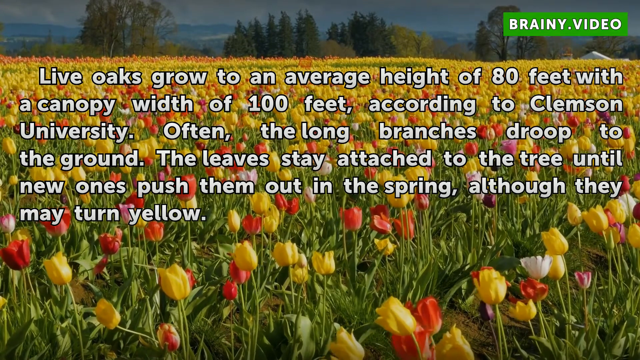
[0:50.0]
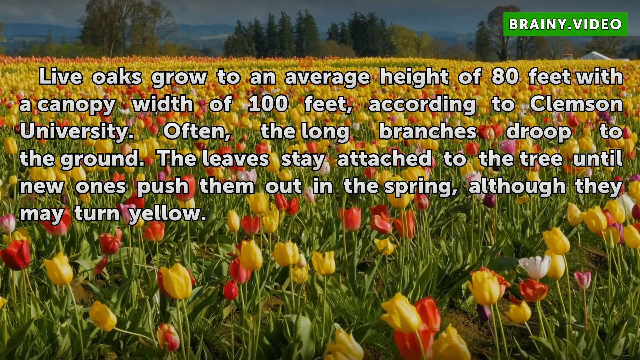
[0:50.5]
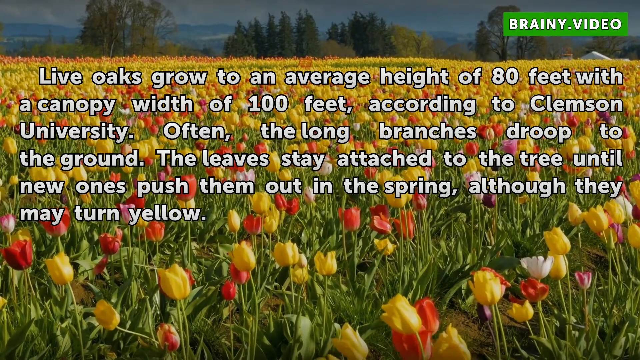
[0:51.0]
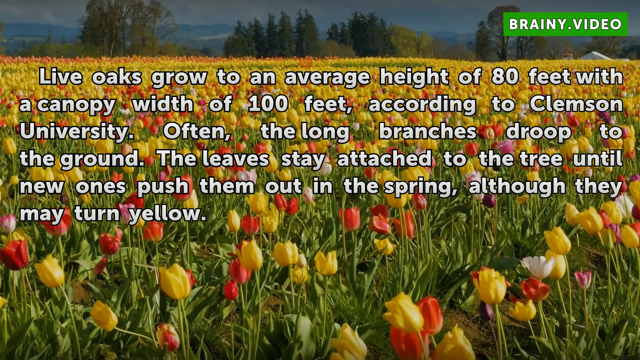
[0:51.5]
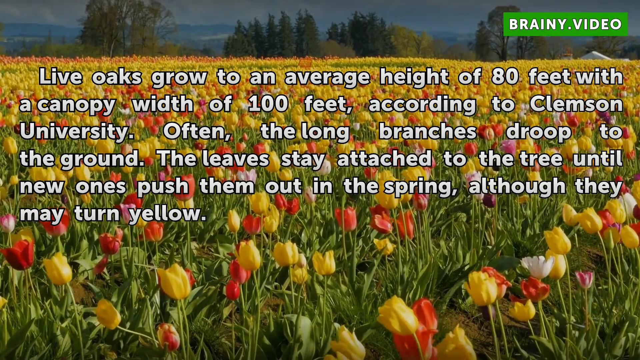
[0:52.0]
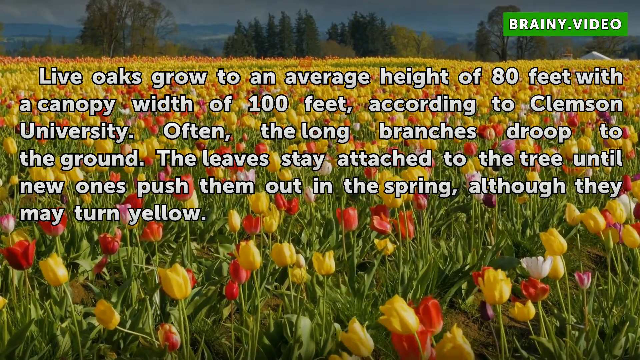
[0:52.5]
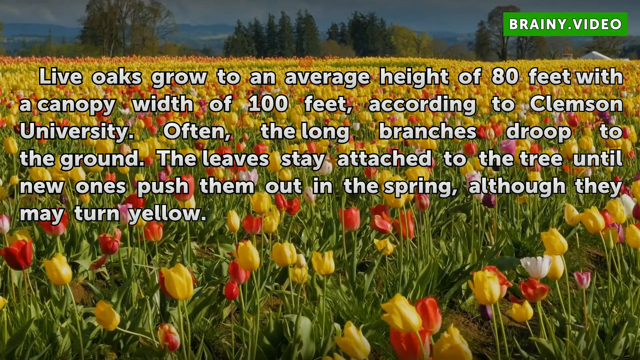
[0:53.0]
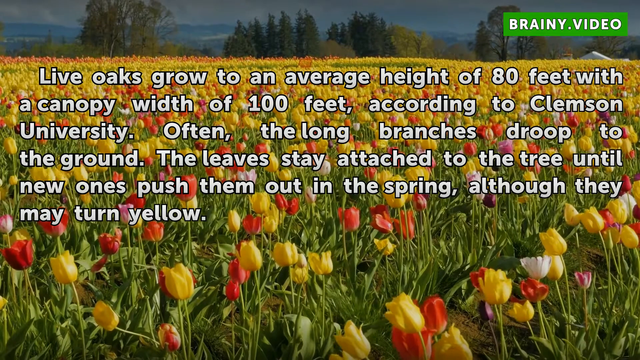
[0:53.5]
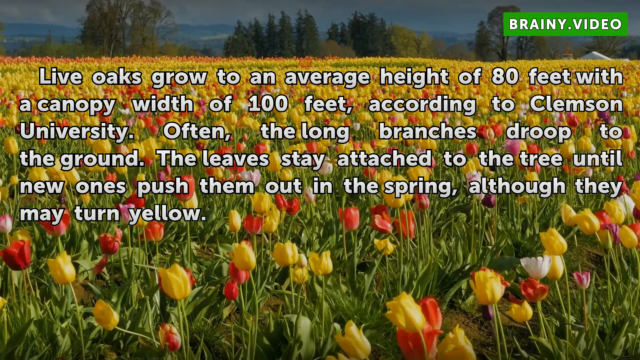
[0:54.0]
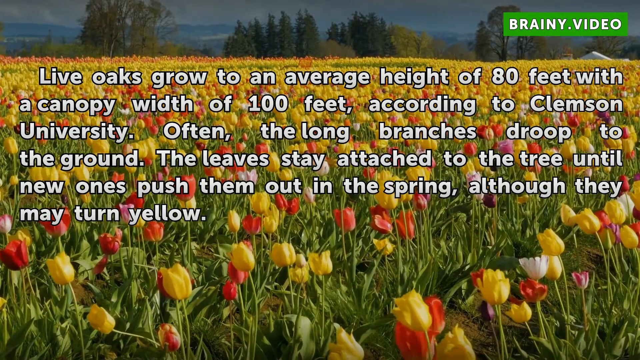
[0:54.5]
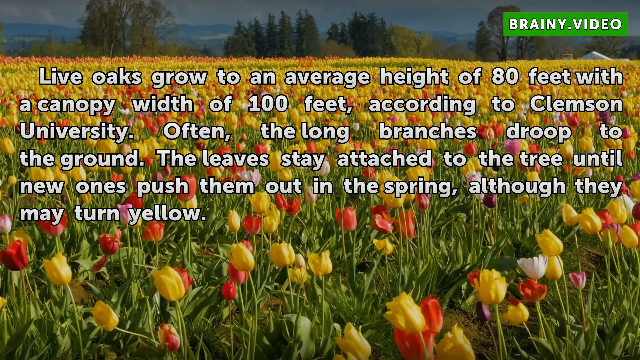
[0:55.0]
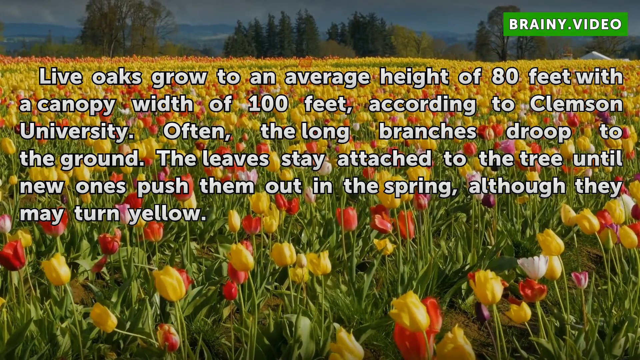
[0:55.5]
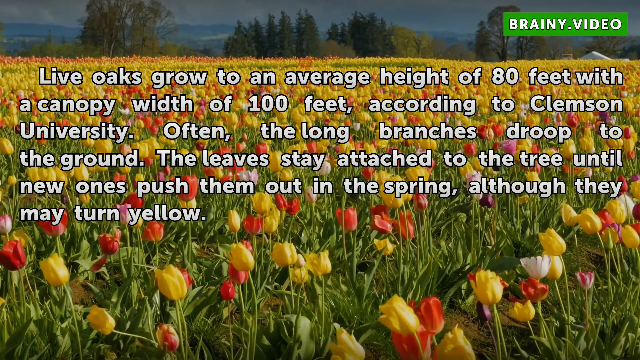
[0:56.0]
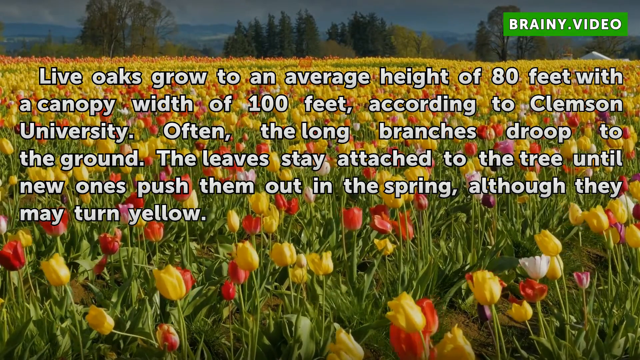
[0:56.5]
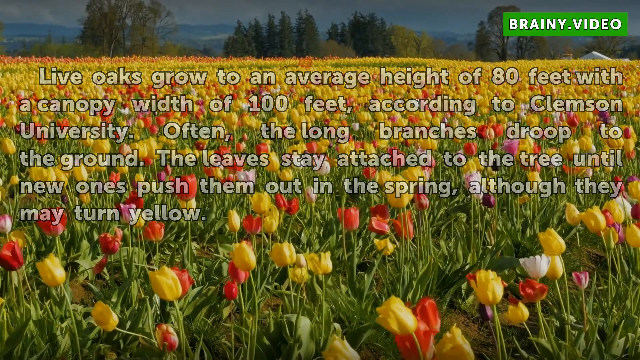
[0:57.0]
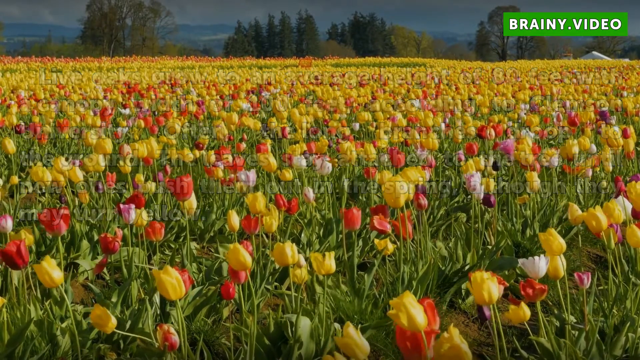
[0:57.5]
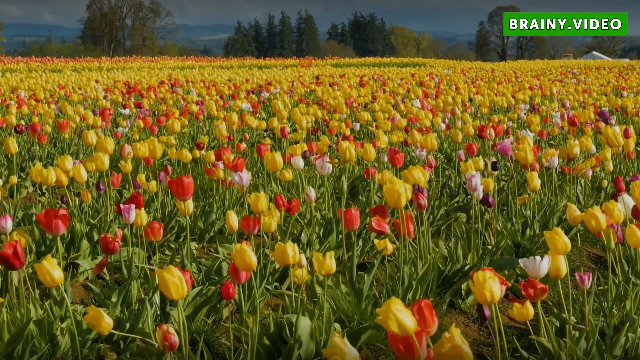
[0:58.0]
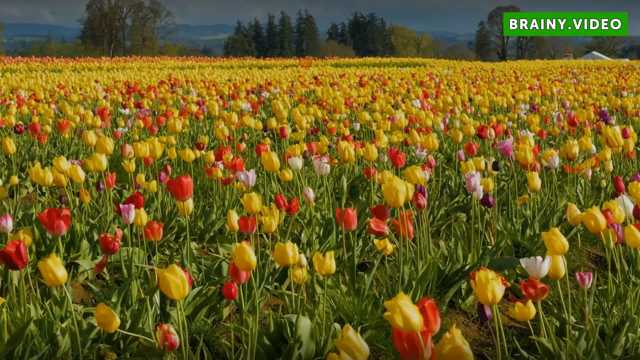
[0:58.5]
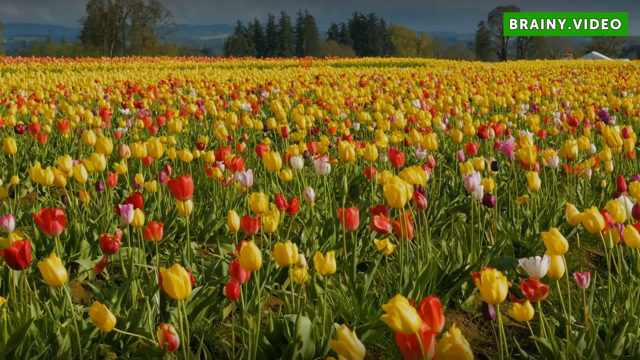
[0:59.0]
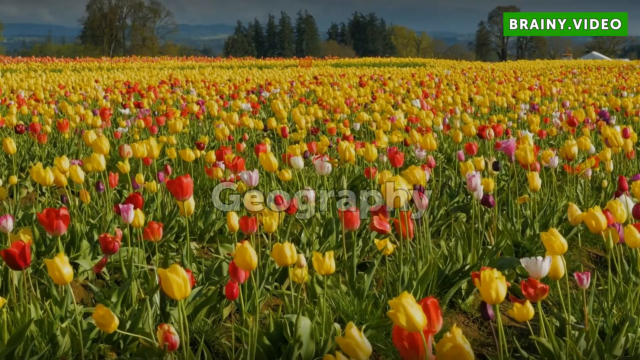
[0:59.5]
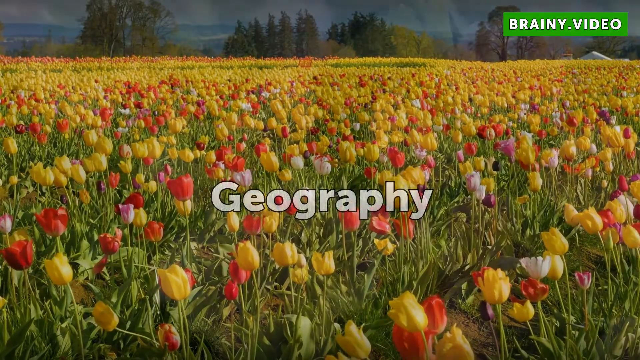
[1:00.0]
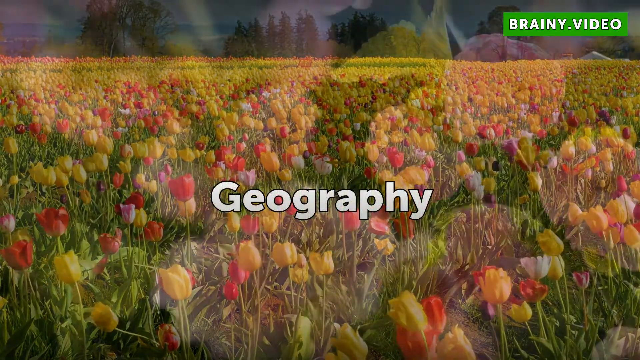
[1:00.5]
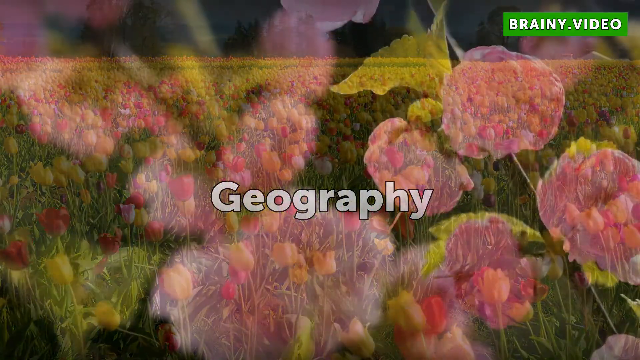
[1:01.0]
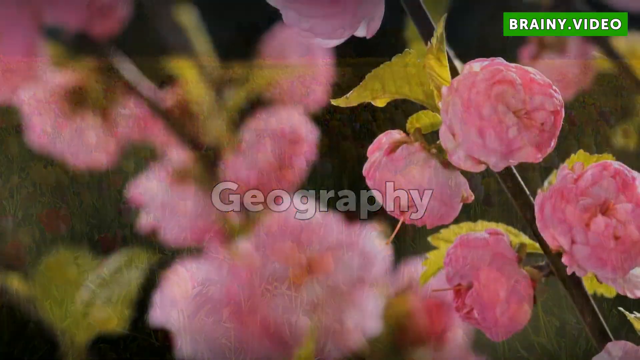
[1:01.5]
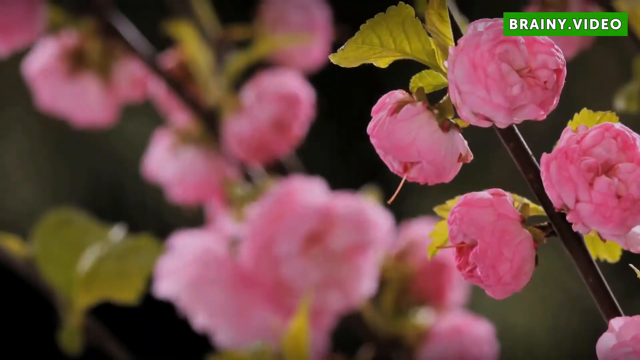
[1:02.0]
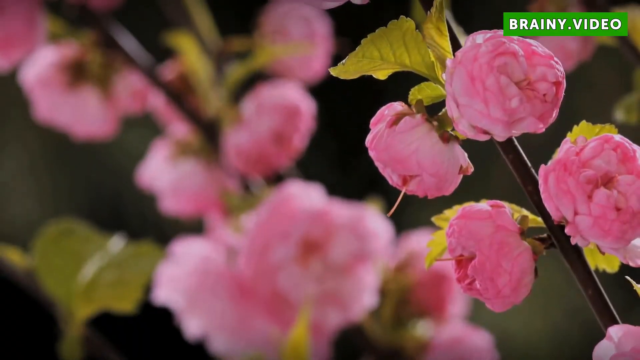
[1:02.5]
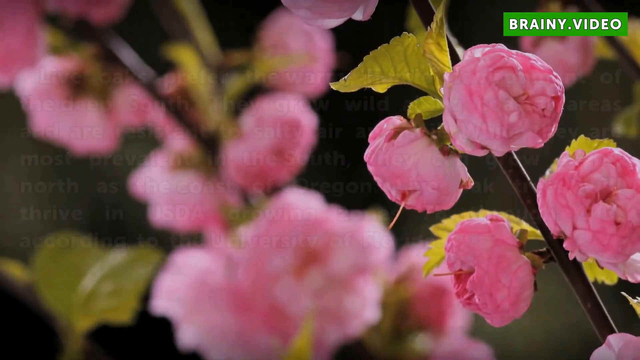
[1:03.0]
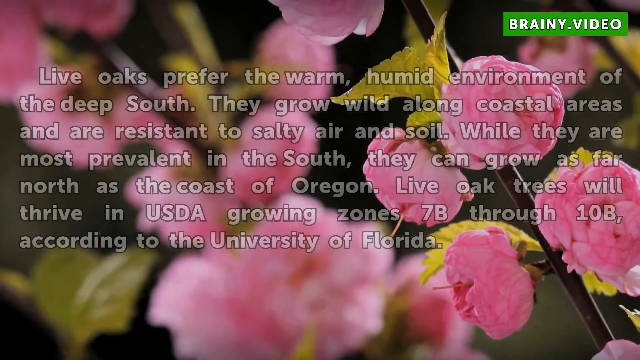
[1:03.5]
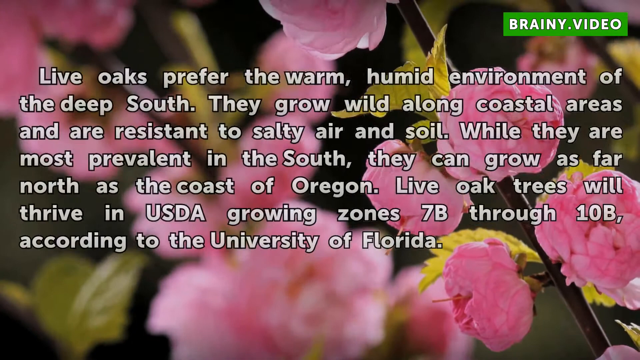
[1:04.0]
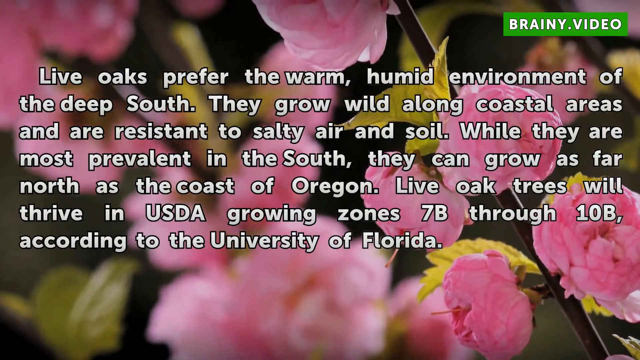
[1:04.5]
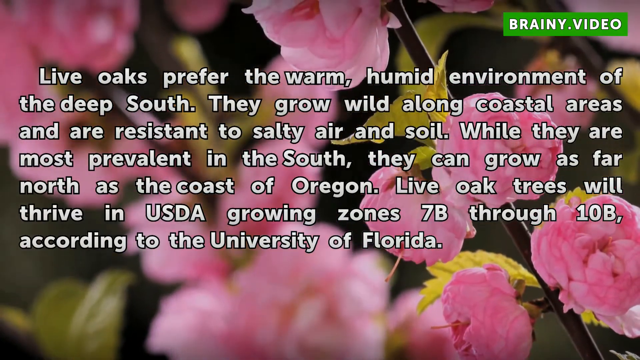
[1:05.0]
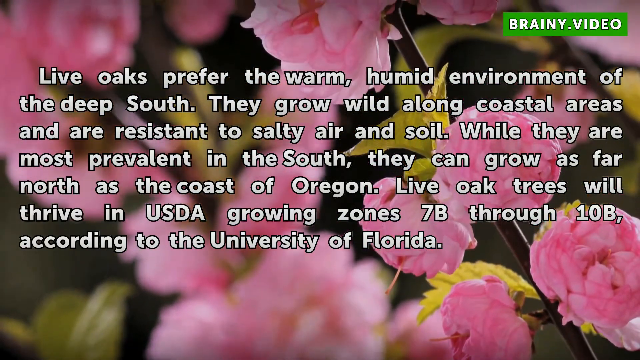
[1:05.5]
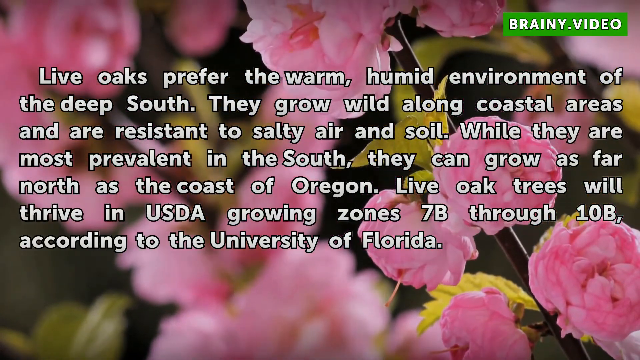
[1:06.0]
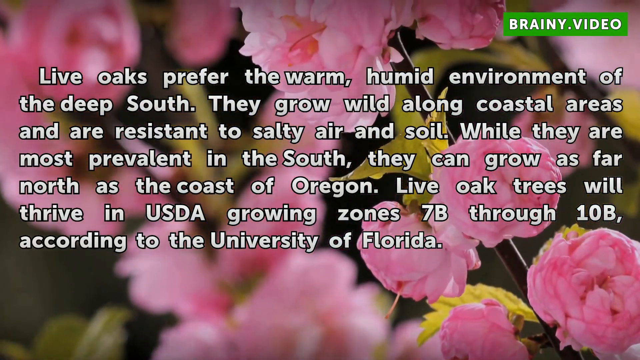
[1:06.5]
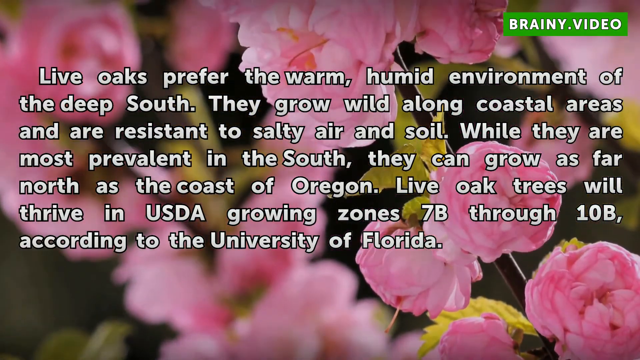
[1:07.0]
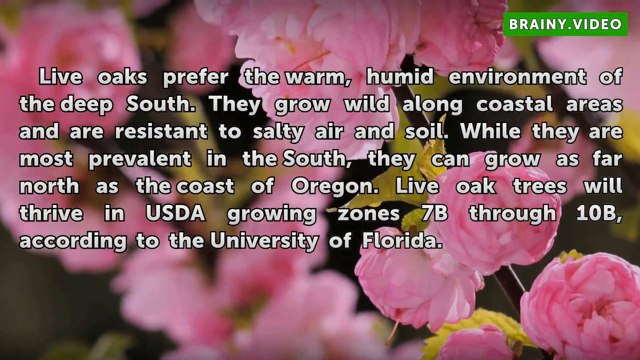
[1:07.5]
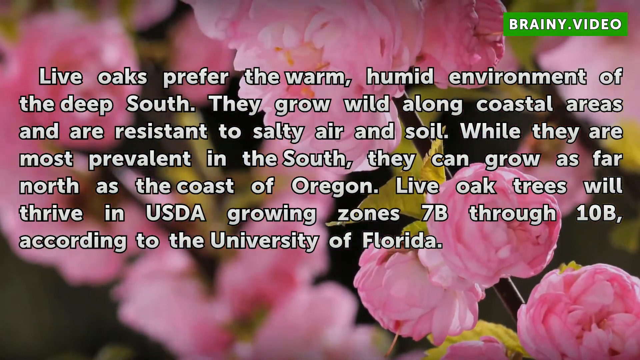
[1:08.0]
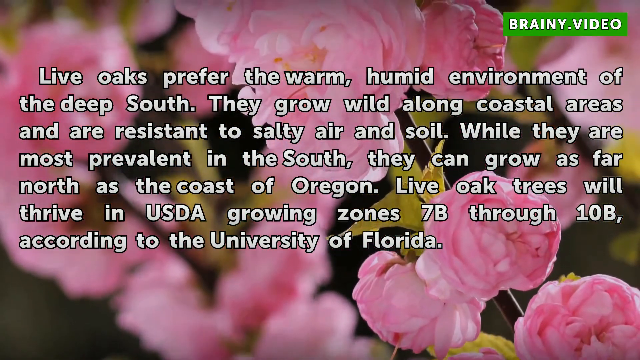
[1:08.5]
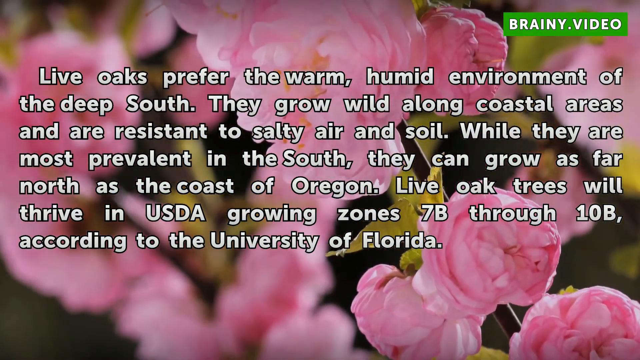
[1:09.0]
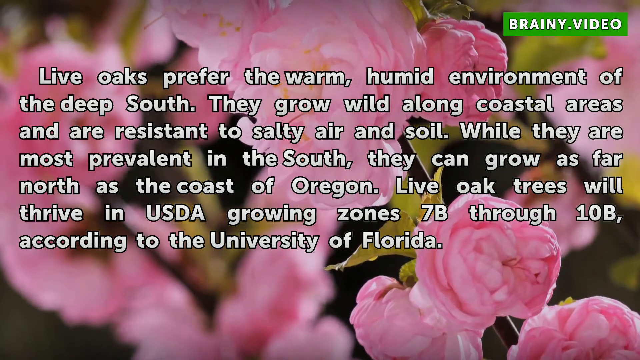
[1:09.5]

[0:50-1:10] The text and background remain, with the flowers moving in the wind. The words on top disappear and the word "Geography" appears in the middle. The background changes to a moving video of pink flowers, with the camera moving upward. Another block of text appears in the upper area of the screen: "Live Oaks prefer the warm, humid environment of the Deep South. They grow wild along coastal areas and are resistant to salty air and soil. While they are most prevalent in the South, they can grow as far north as the coast of Oregon. Live Oak trees will thrive in USDA growing zones 7b through 10b, according to the University of Florida." Behind the text, the camera keeps moving upward over many pink flowers, with more blurry pink flowers in the background.